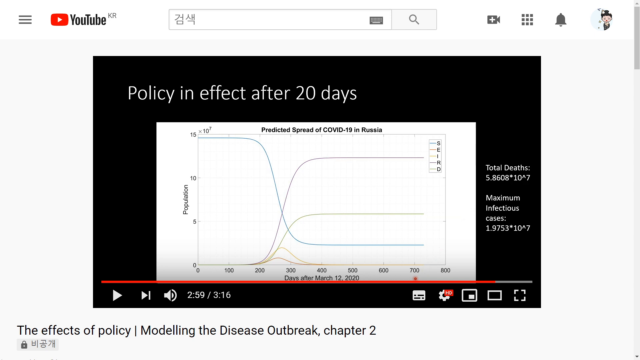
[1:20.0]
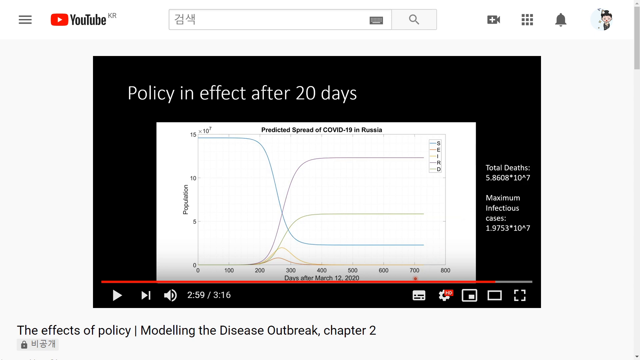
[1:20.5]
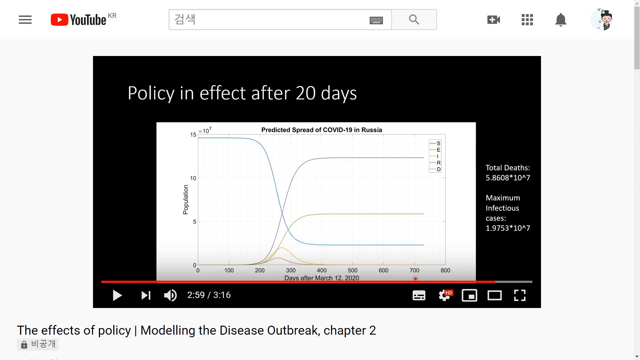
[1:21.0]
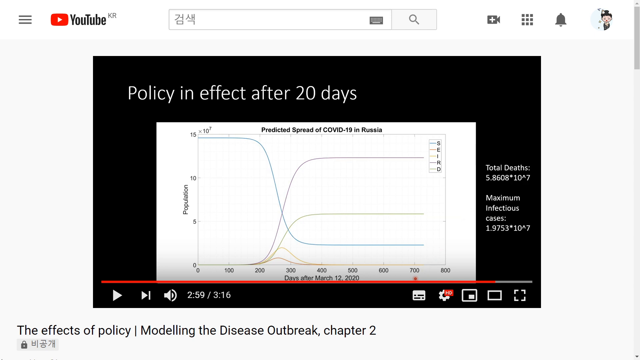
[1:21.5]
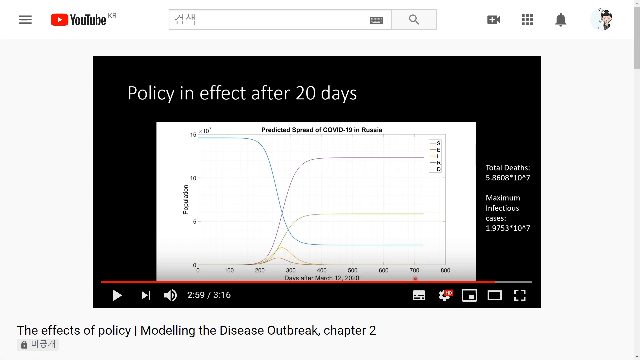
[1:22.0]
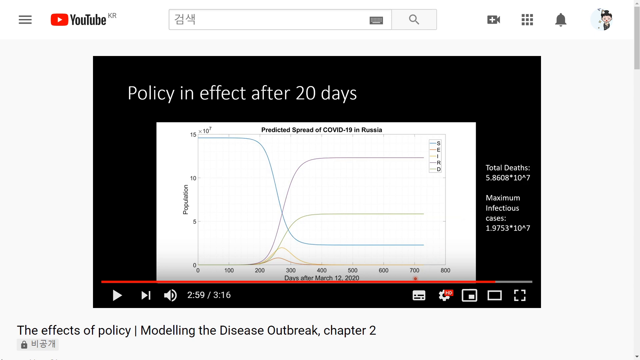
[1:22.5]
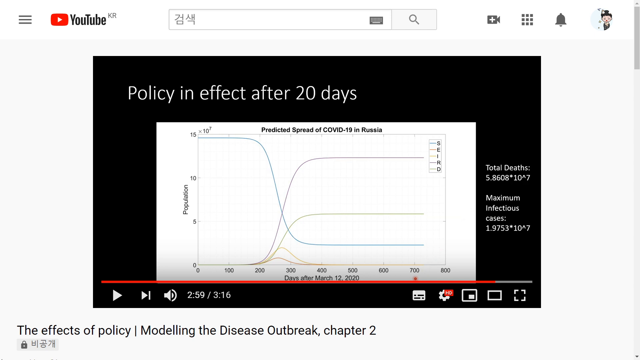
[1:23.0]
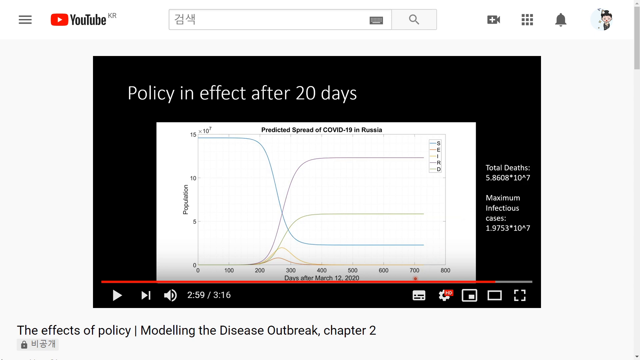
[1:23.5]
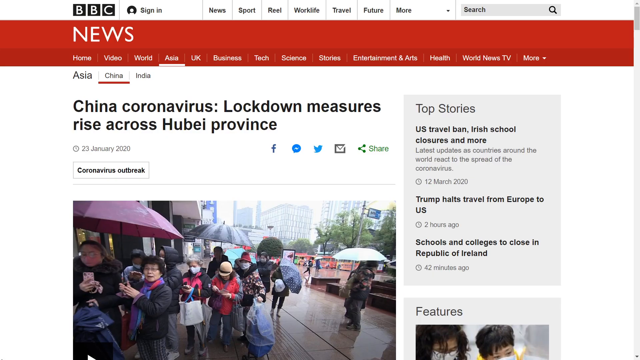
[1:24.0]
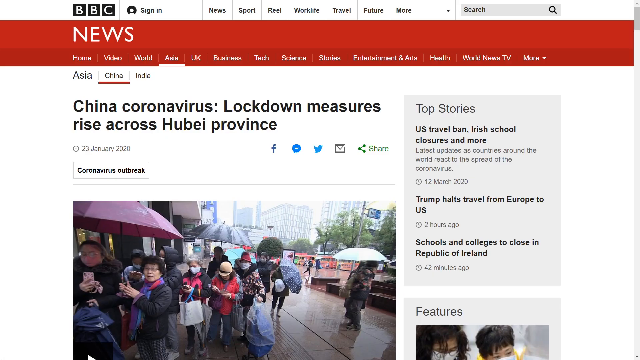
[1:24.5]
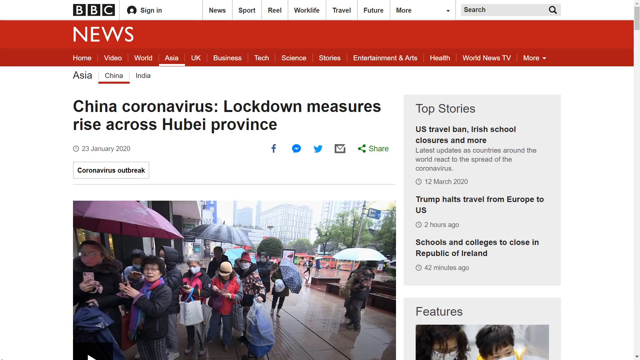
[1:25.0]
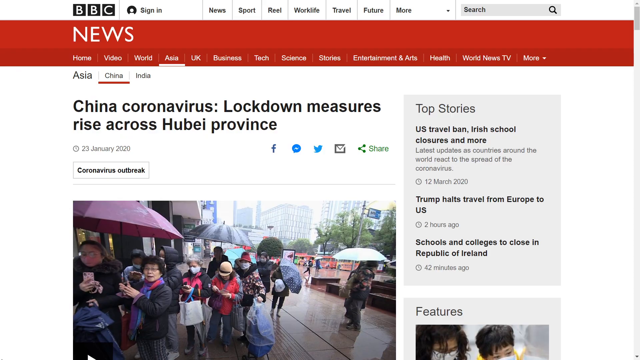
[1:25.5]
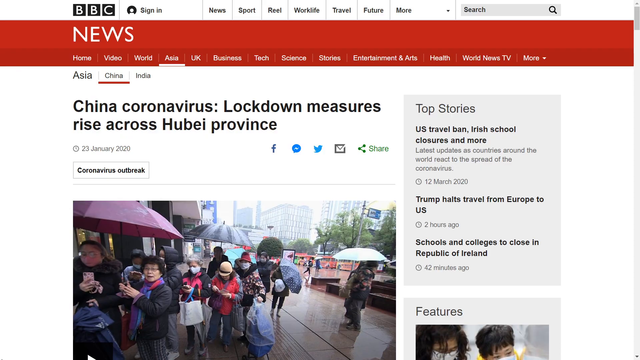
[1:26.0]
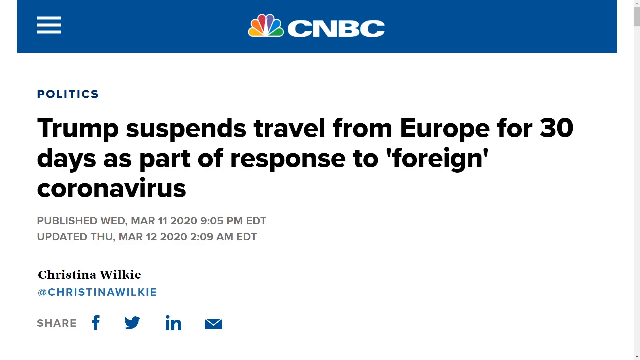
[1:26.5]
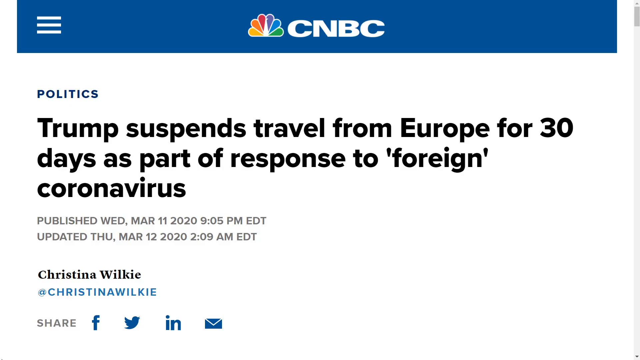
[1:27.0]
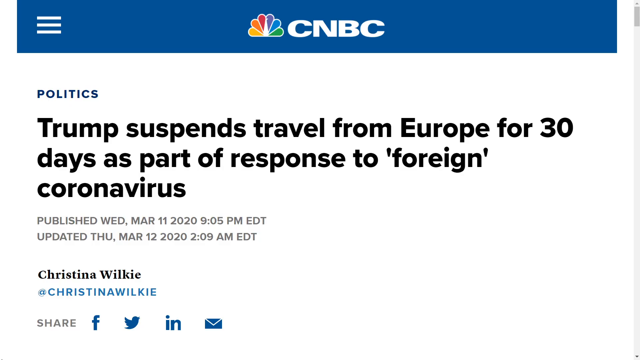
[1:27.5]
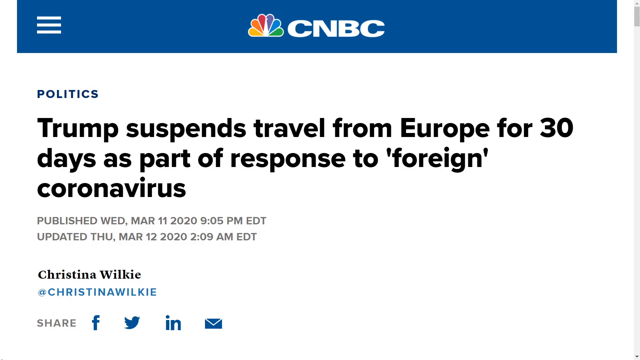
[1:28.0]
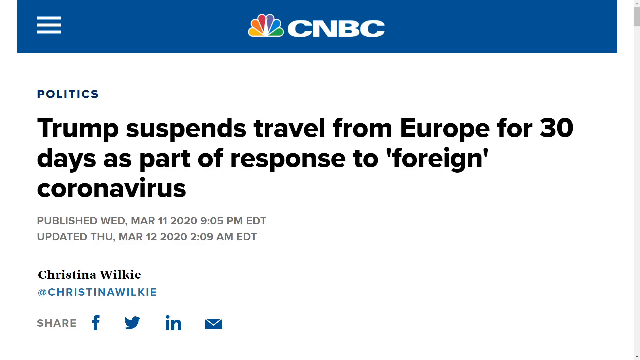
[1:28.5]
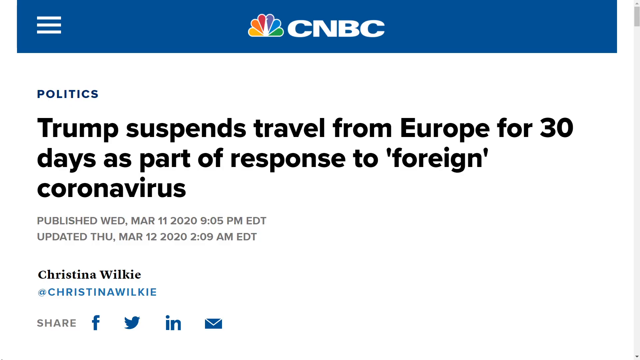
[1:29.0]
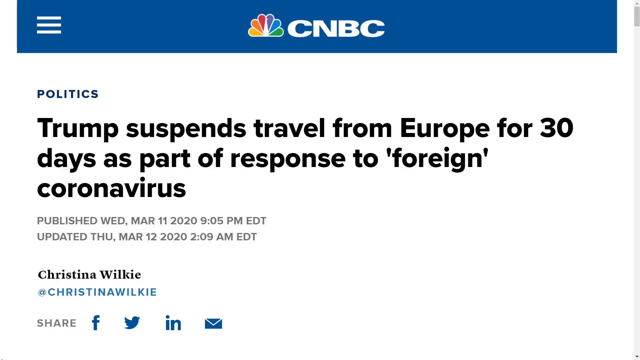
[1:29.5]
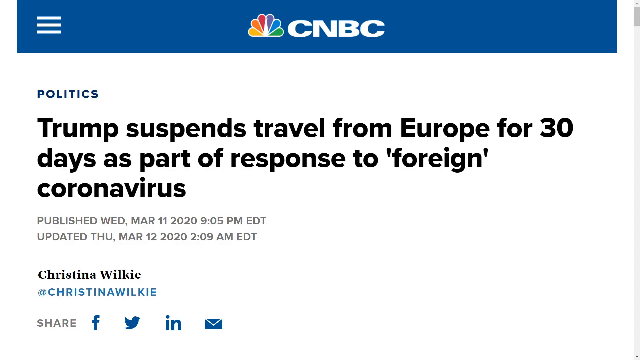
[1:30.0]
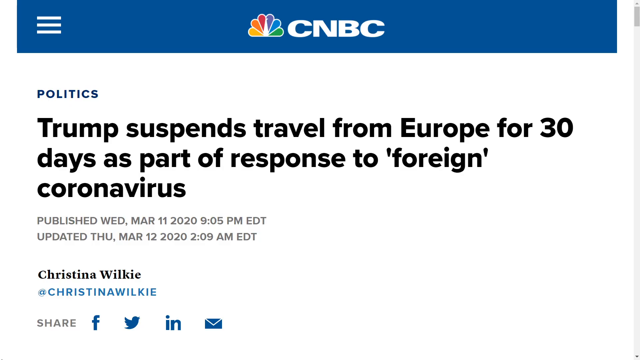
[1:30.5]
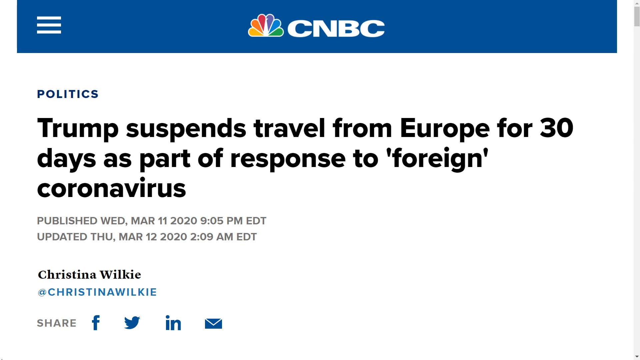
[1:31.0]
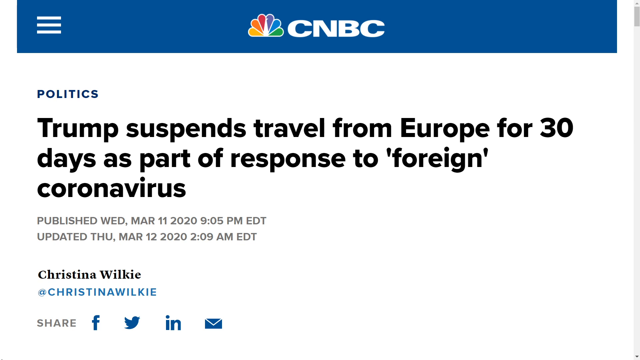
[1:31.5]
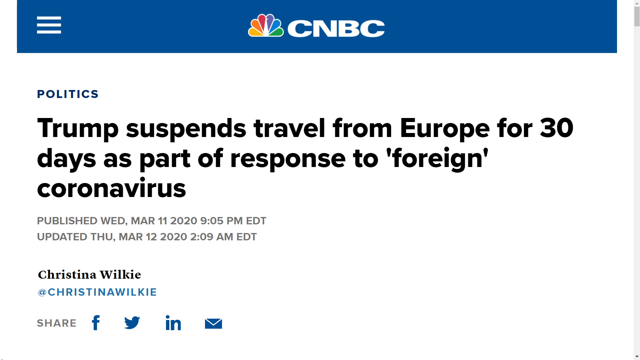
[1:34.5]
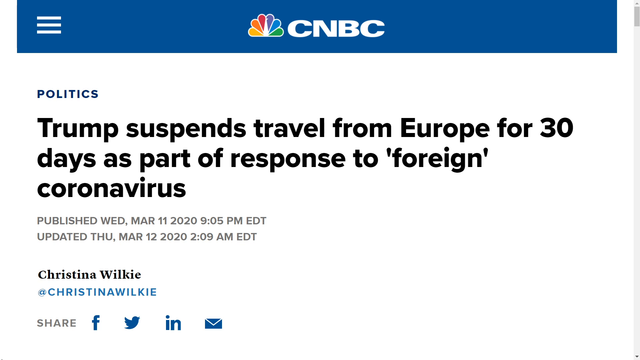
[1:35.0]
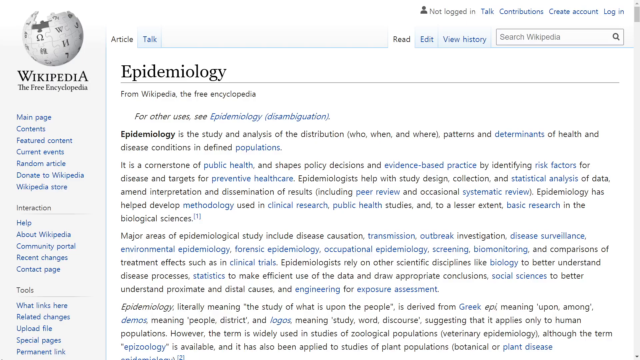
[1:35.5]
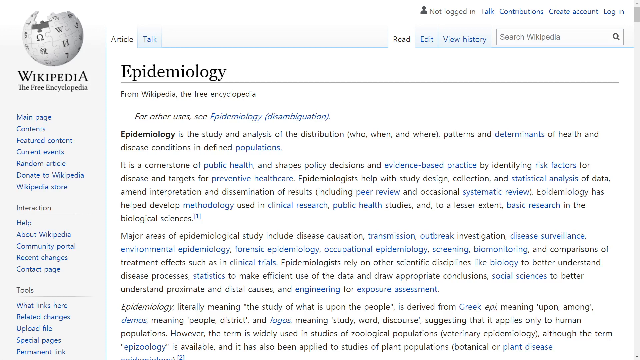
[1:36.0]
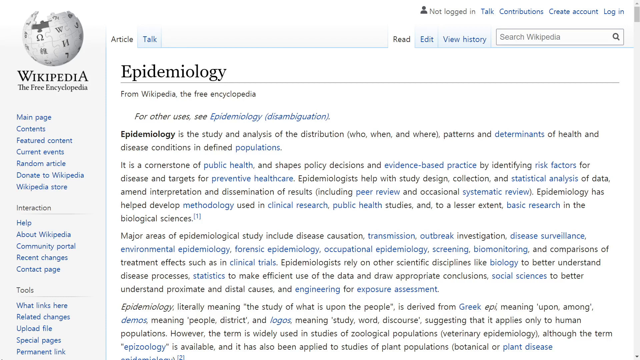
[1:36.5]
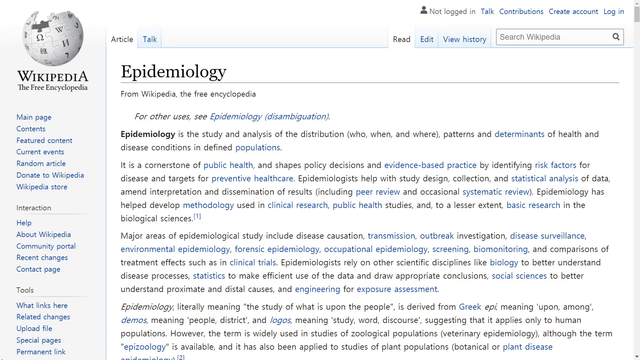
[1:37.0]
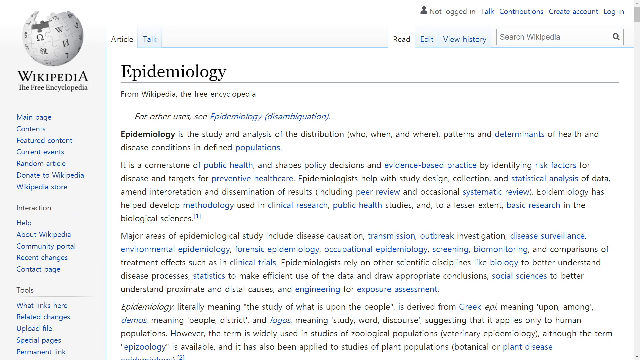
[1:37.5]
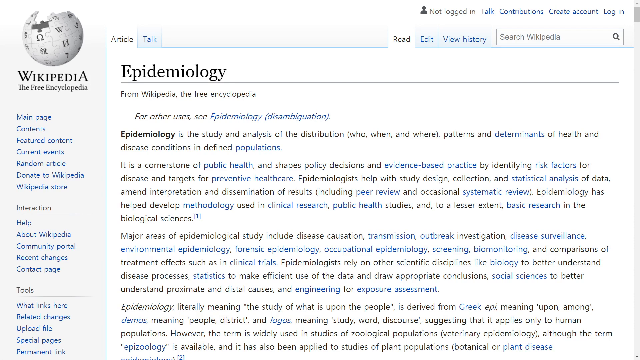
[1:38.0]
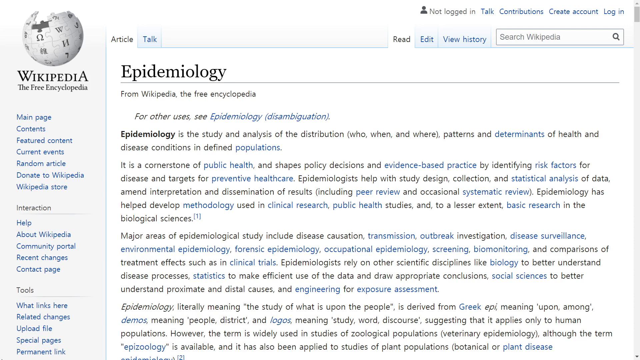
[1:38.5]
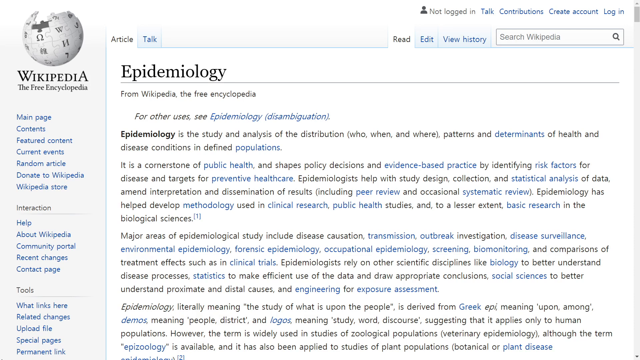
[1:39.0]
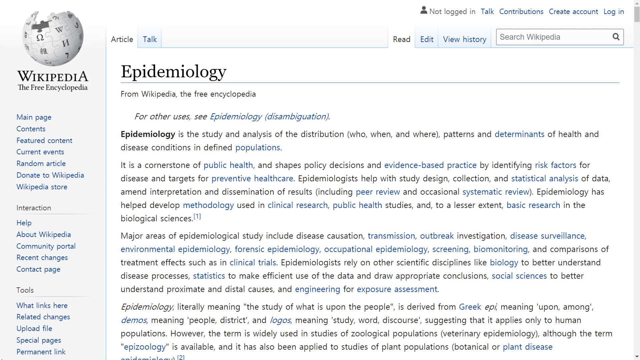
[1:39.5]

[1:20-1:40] The chart titled "predicted spread of COVID-19 in Russia", with "policy in effect after 20 days", remains on screen. The y-axis, population, ranges from 0 to 5, 5 to 10, and 10 to 15. A blue line representing S drops dramatically from 15 to 5 and then to around 2. The other lines, yellow and green, continue from 0 to 200, then spike to above 10 and remain constant. On the right side are total deaths of 5.86 × 10^7 and maximum infection cases of 1.9753 × 10^7. The next page has the headline "China coronavirus lockdown measures rise across the province", with an embedded photo of the coronavirus outbreak below it. The weather in the photo is rainy or snowy, and people wear big jackets, are dressed warmly, and have masks and umbrellas. In the top stories in the right corner is "US travel ban, Irish school closure, and more".